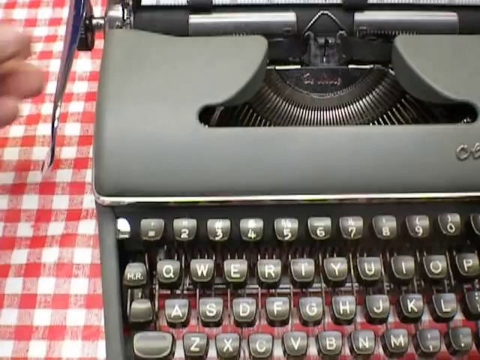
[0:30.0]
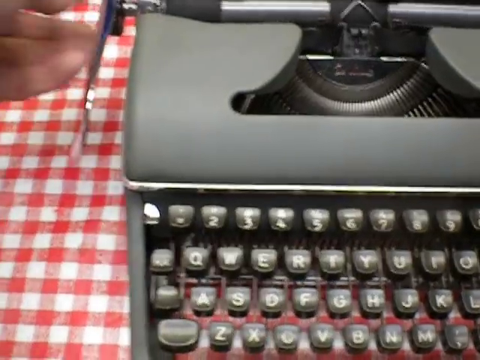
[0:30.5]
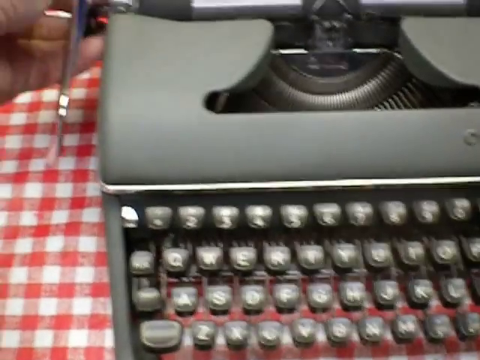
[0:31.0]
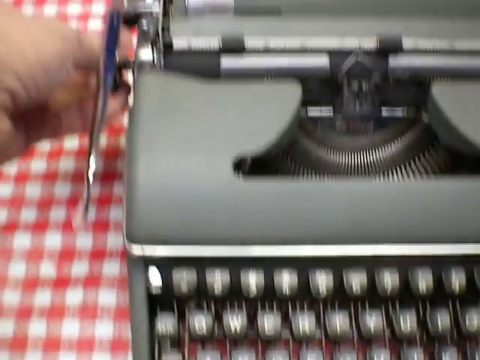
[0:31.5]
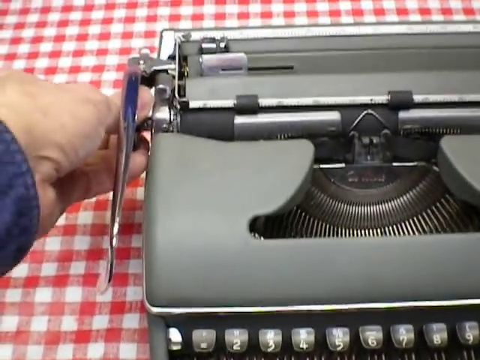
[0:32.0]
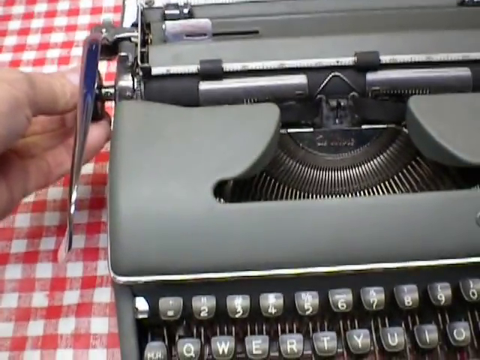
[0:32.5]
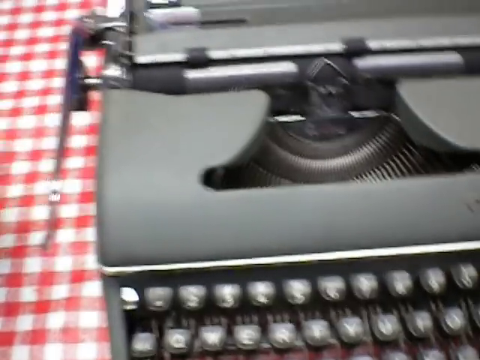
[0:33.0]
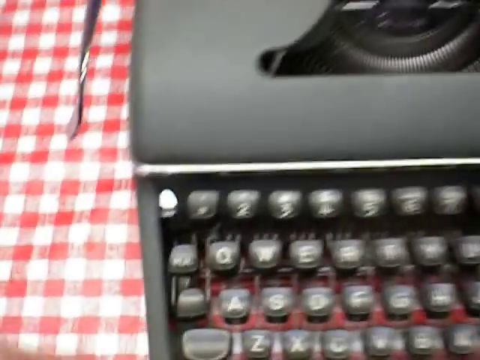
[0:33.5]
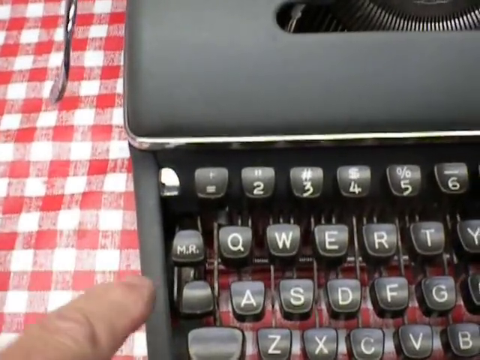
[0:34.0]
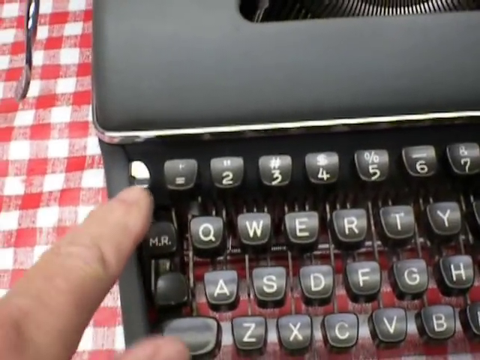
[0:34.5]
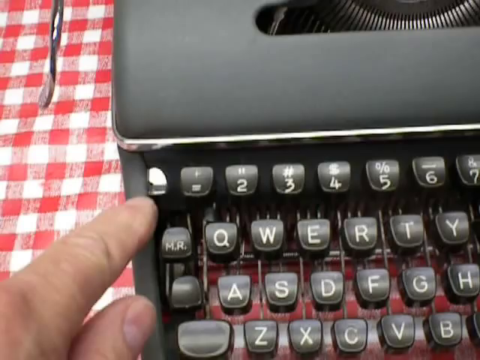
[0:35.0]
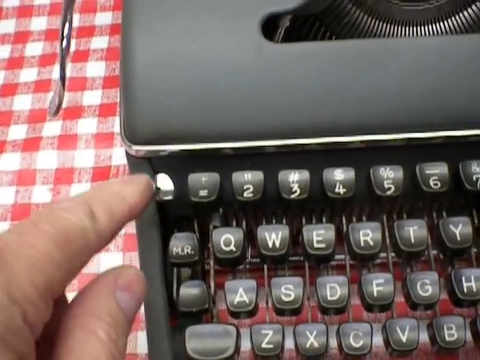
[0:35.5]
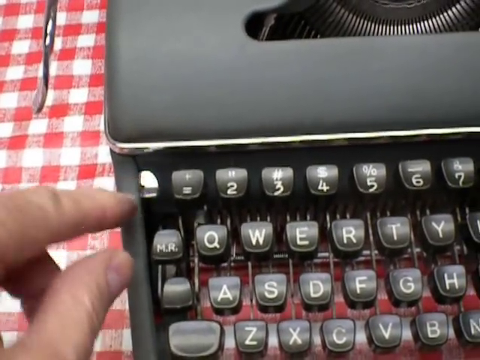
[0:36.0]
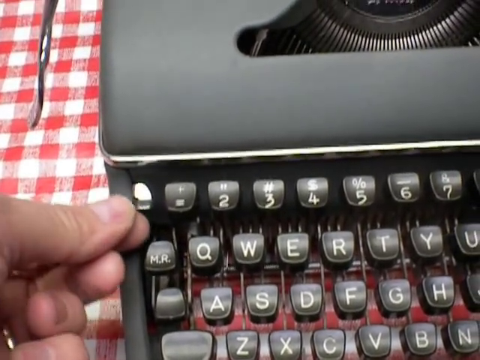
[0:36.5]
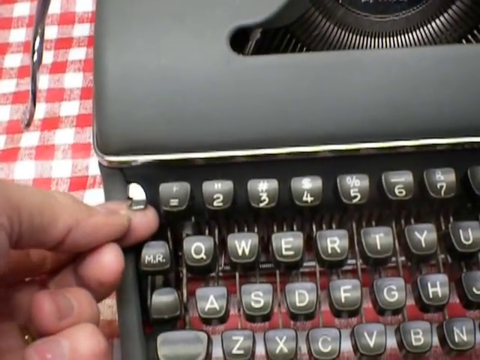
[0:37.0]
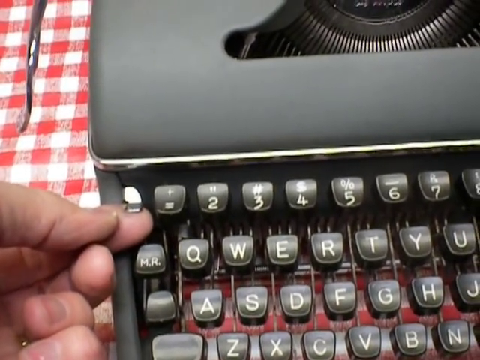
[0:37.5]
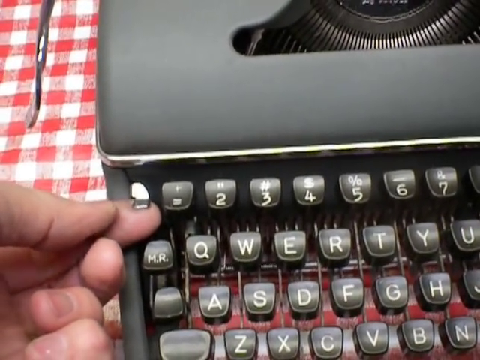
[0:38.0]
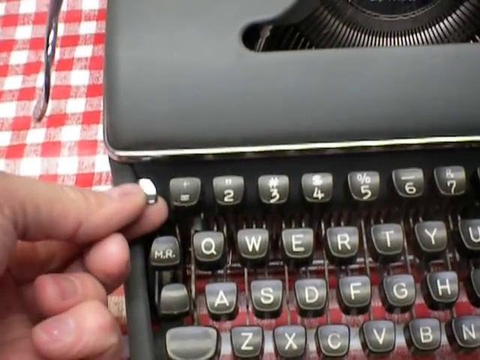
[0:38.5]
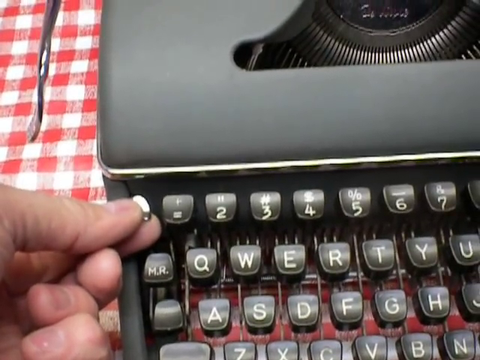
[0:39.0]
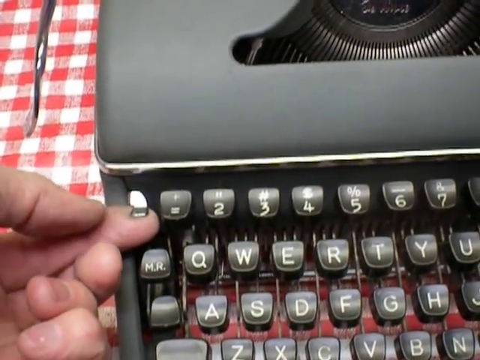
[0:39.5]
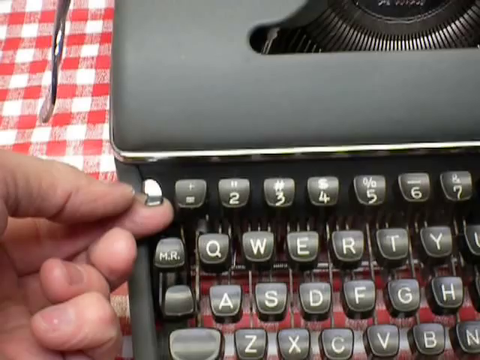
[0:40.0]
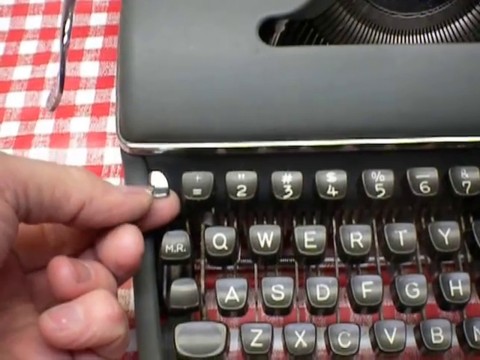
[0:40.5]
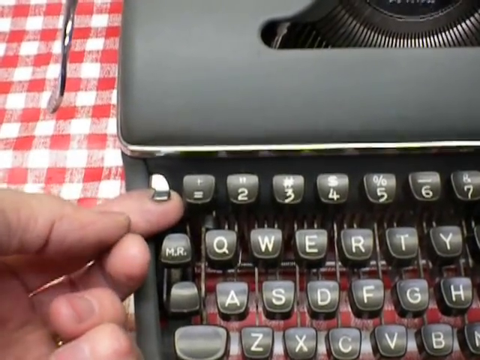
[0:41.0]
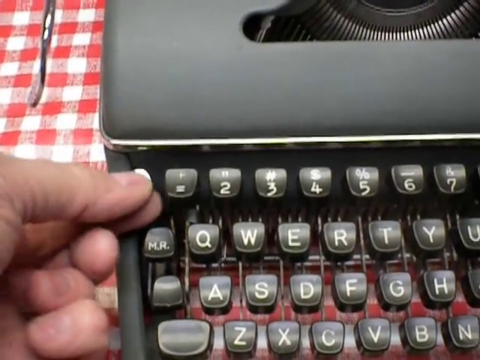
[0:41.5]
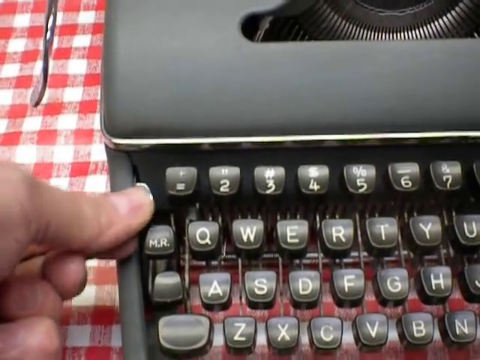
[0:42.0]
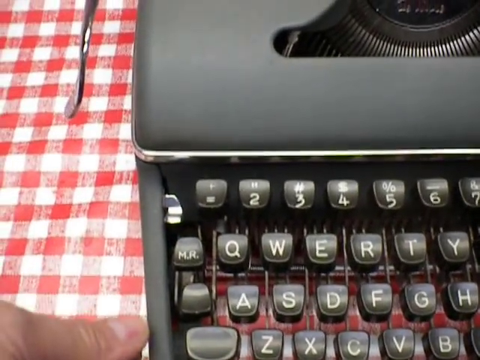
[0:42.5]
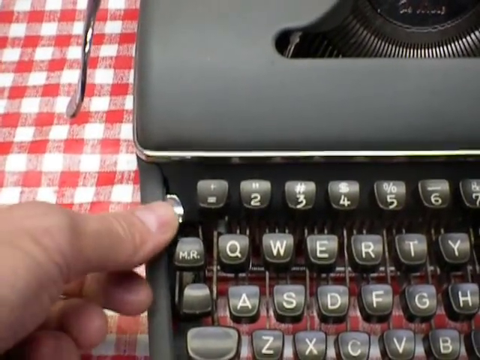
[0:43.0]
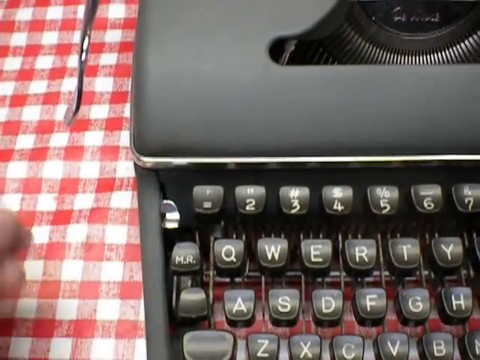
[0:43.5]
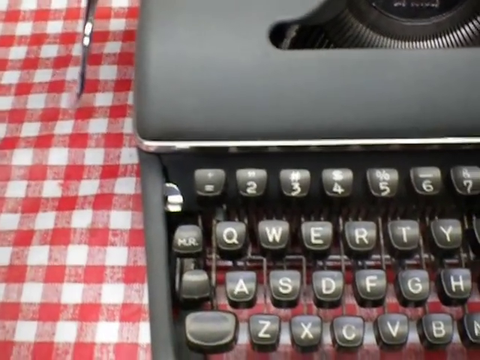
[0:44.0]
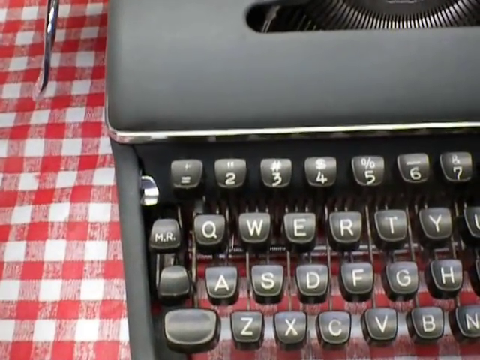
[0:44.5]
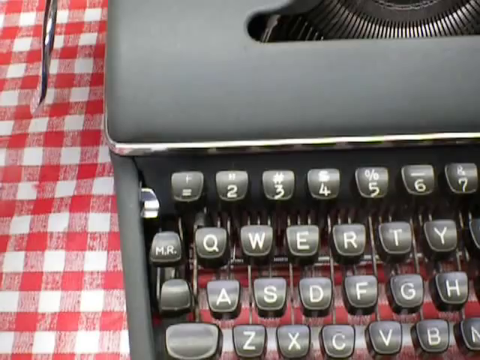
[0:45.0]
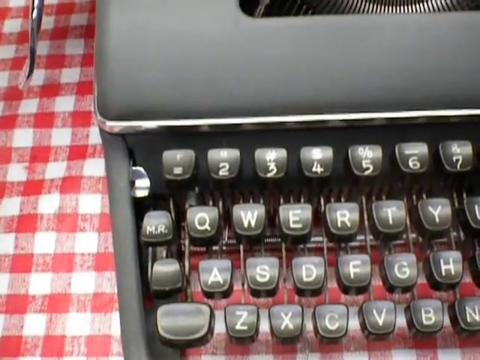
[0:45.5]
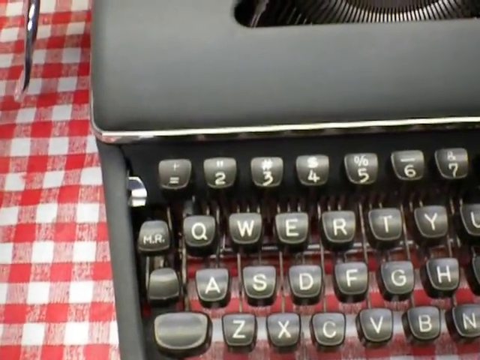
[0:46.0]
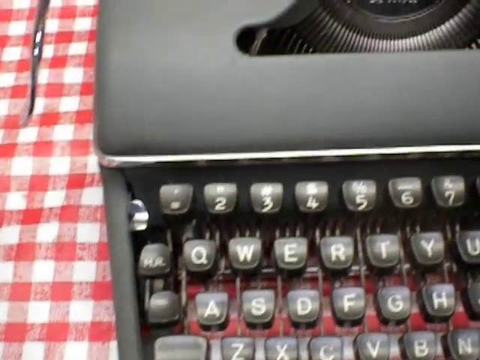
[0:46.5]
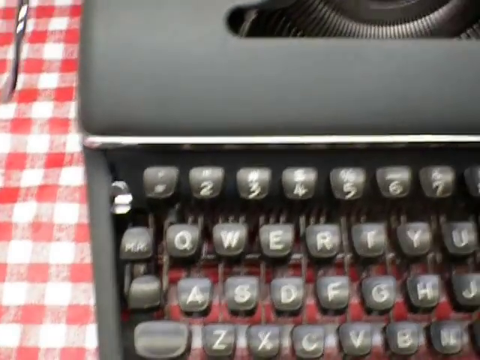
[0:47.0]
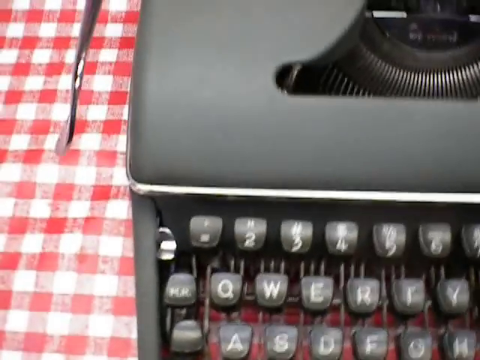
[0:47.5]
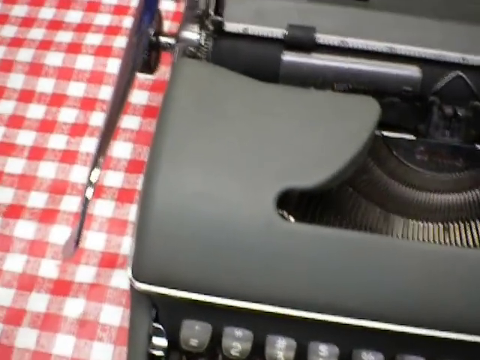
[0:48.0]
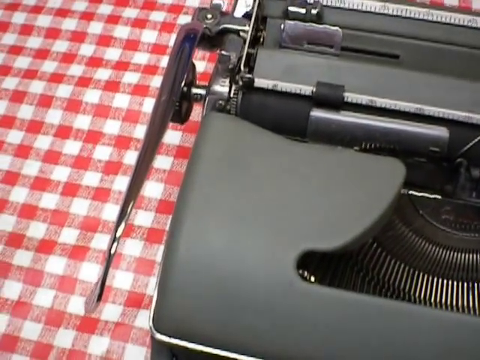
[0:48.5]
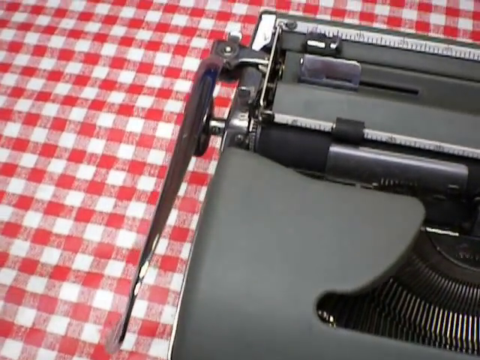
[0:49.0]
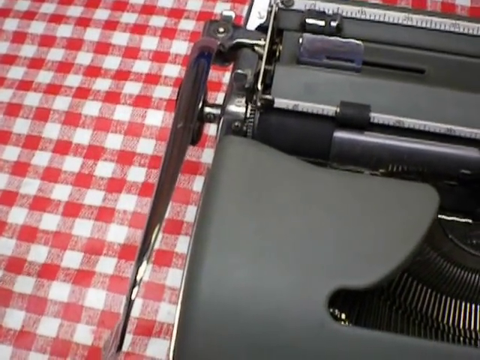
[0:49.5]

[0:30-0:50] A man's hand touches the silver return handle, or bail, on the upper left-hand side of a vintage typewriter. At the base of this handle is a round black button, which he pushes in and out with his fingers. He then moves his hand down to a small silver switch on the top row of number buttons, next to the number one button, and flips it up and down with his index finger. The vintage manual typewriter is slate gray, of the Olympia brand, and all of its buttons have white numbers or white letters. It sits on a table with a red and white checkerboard cloth in small squares.